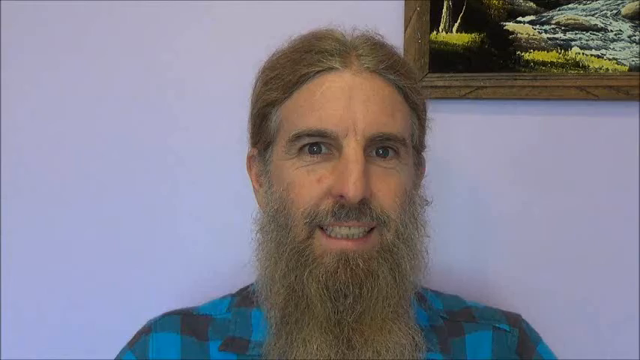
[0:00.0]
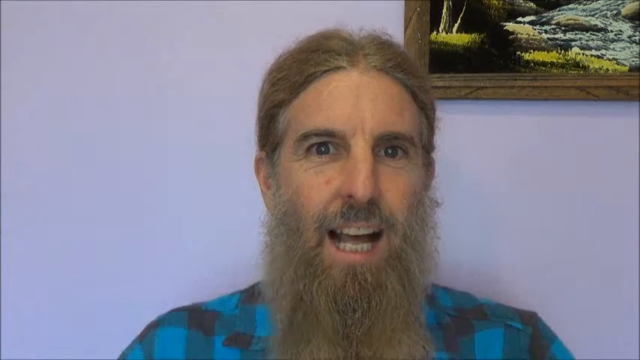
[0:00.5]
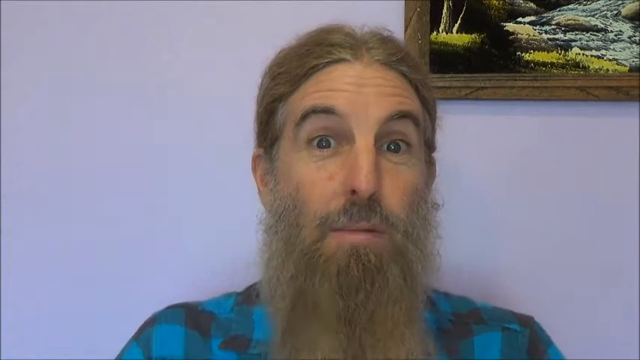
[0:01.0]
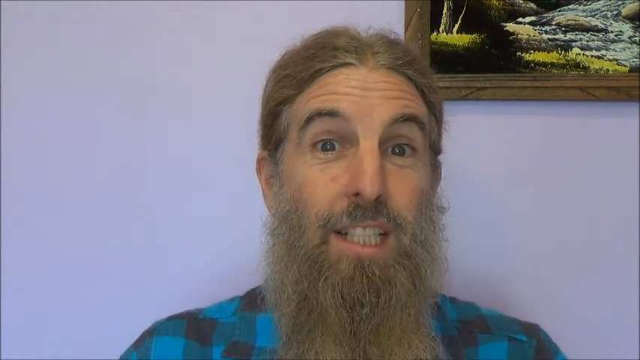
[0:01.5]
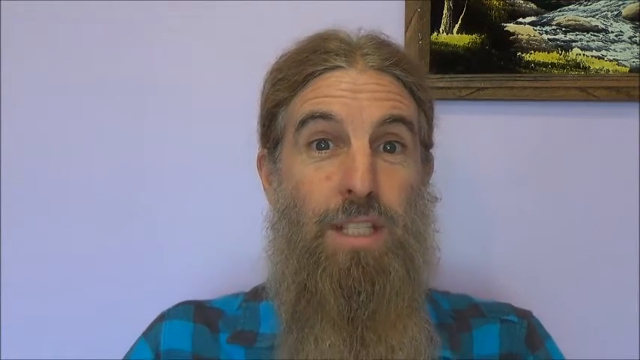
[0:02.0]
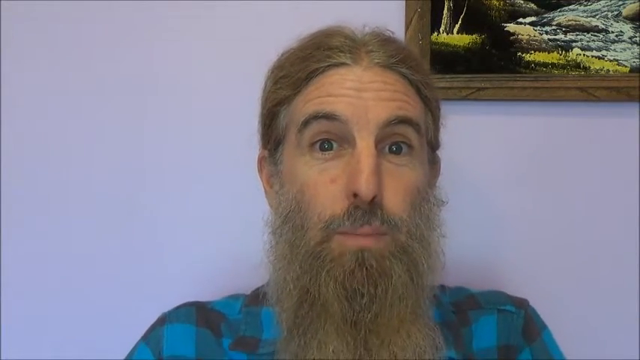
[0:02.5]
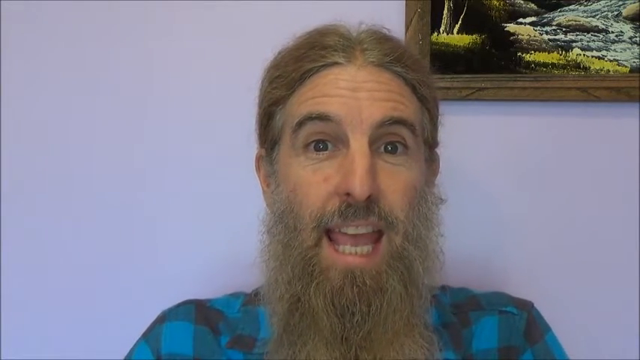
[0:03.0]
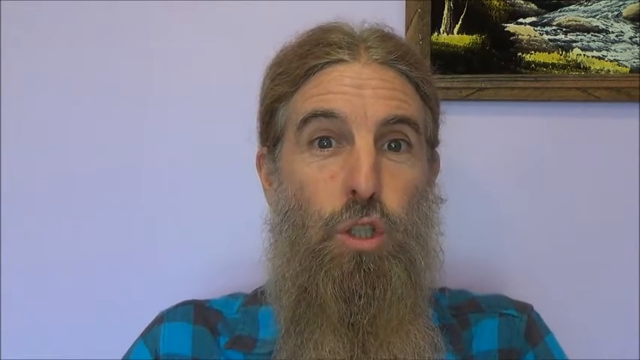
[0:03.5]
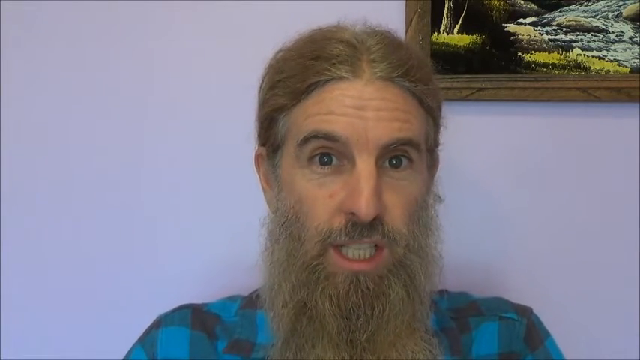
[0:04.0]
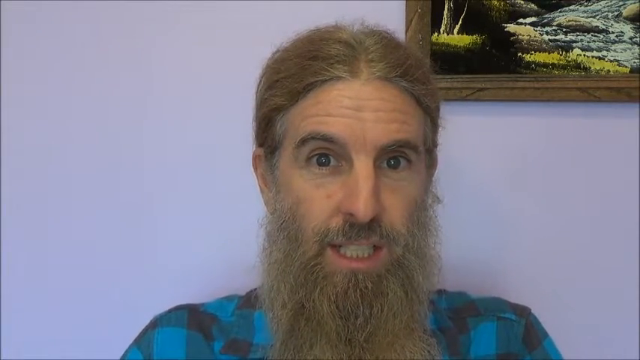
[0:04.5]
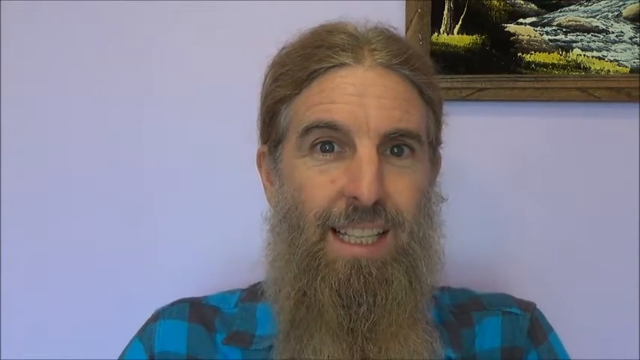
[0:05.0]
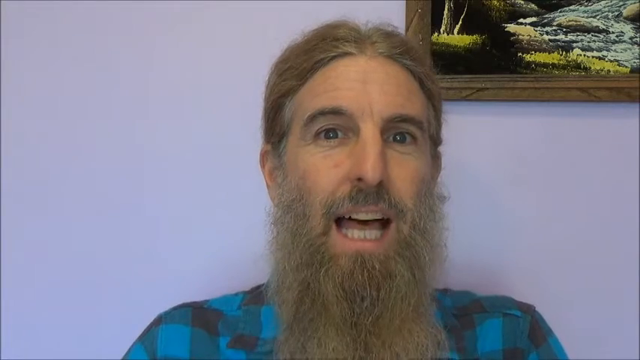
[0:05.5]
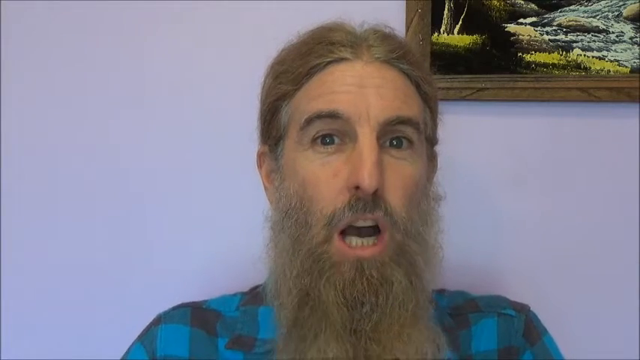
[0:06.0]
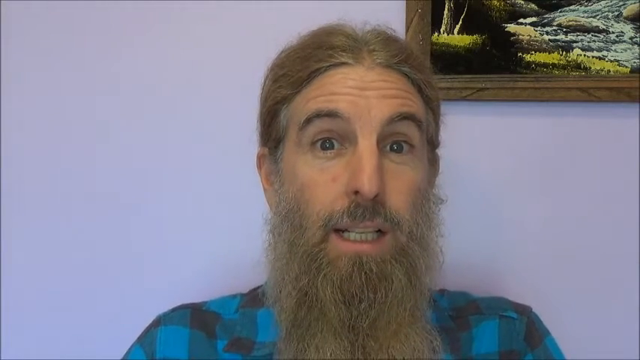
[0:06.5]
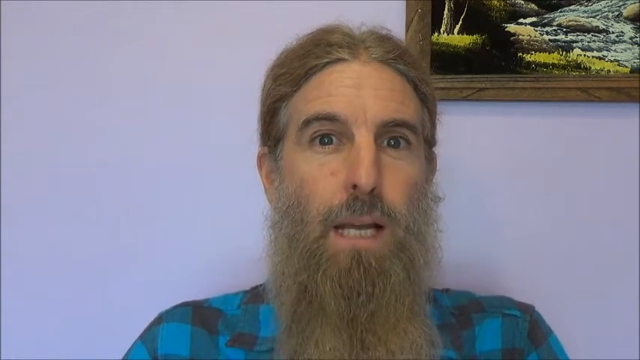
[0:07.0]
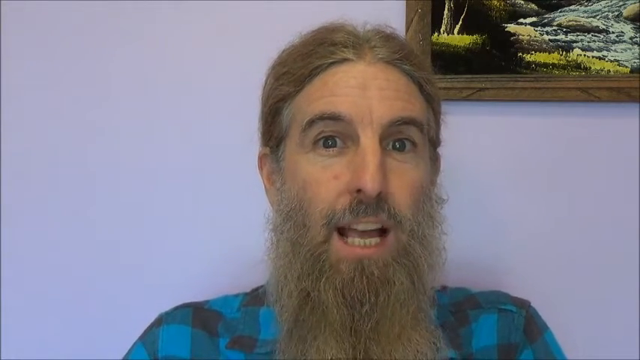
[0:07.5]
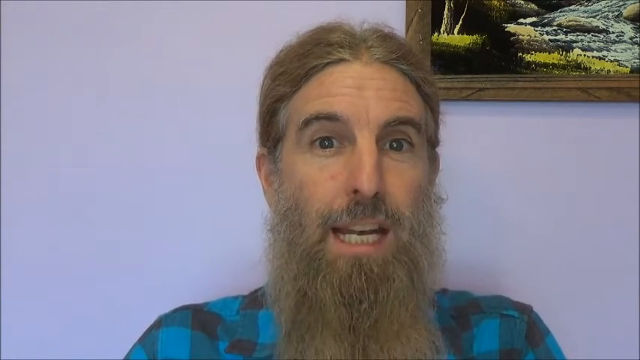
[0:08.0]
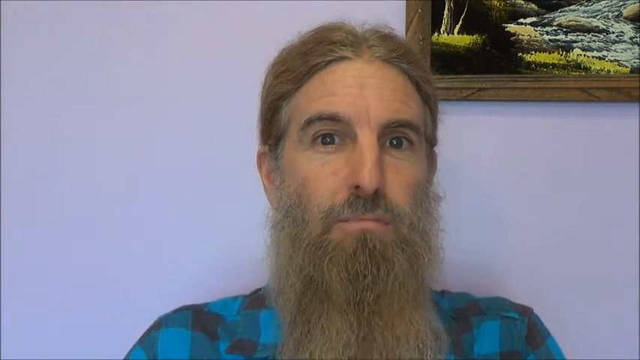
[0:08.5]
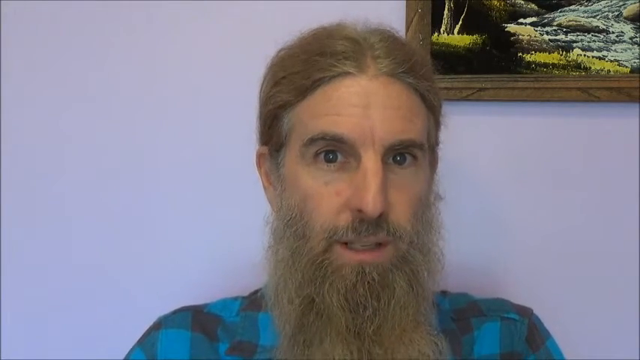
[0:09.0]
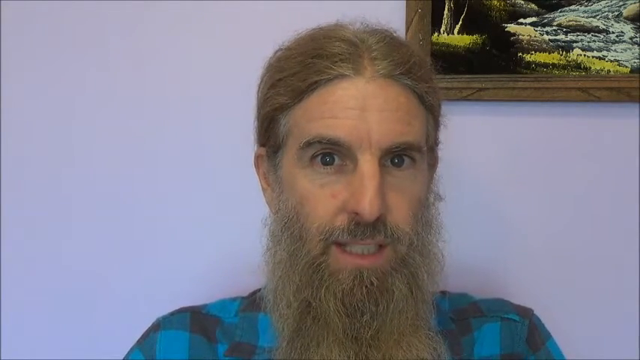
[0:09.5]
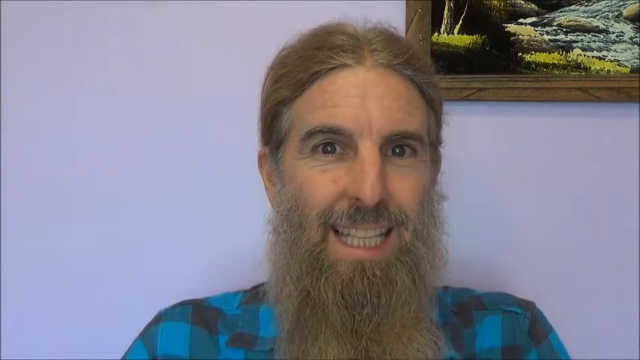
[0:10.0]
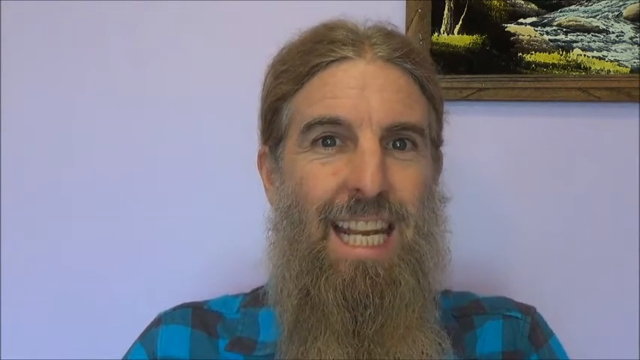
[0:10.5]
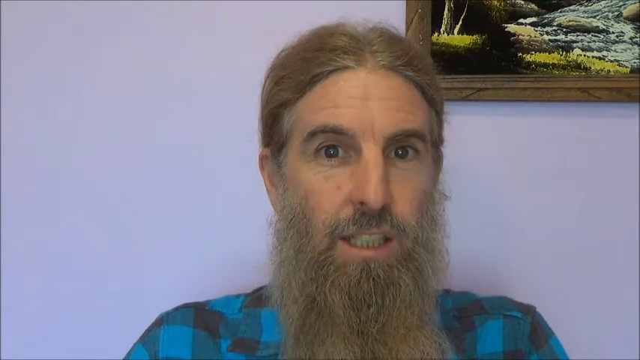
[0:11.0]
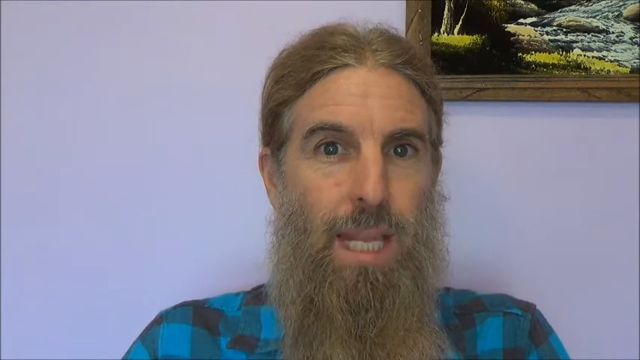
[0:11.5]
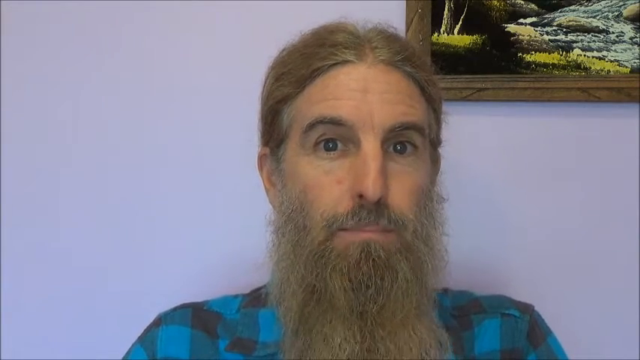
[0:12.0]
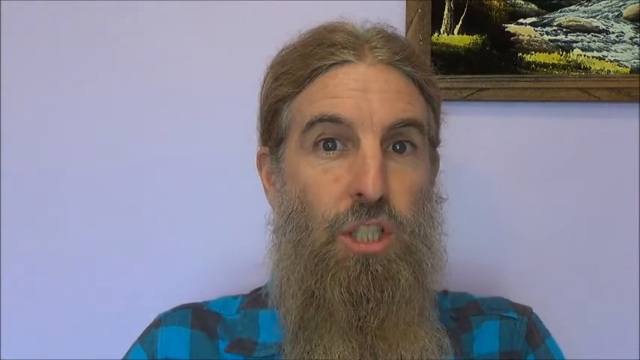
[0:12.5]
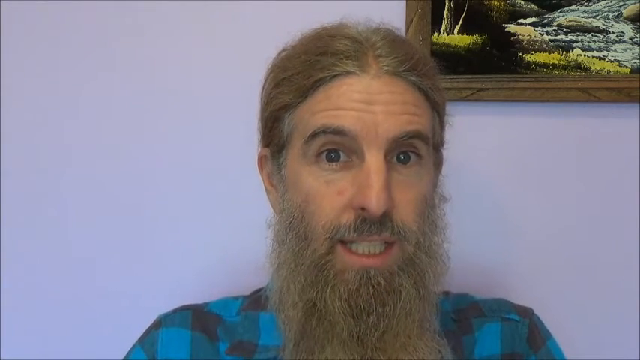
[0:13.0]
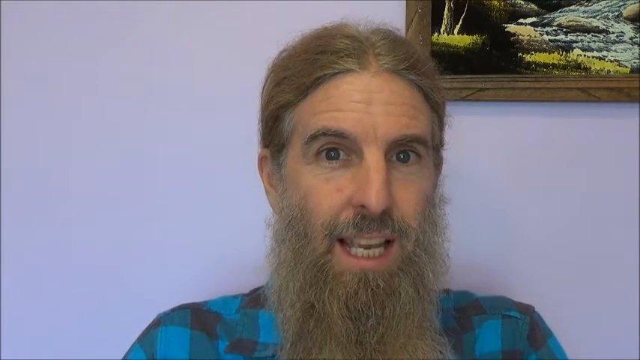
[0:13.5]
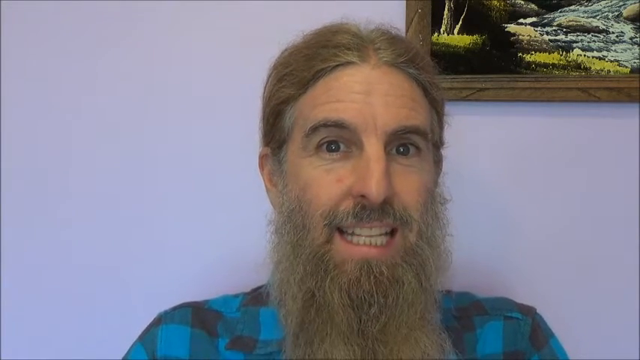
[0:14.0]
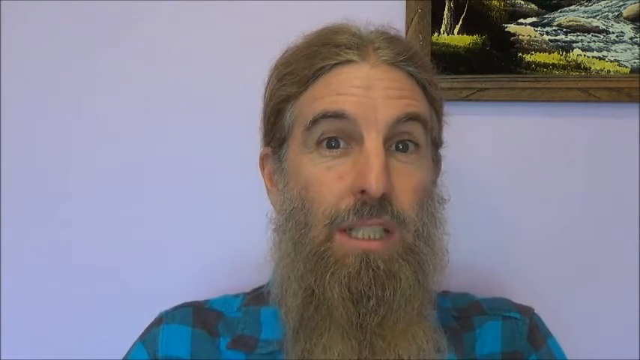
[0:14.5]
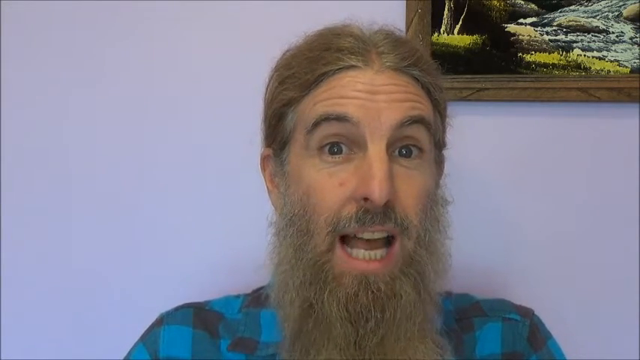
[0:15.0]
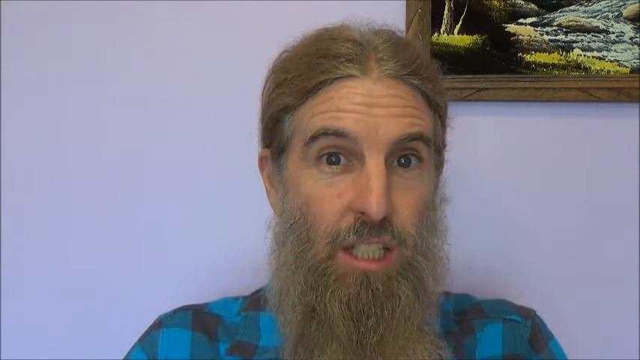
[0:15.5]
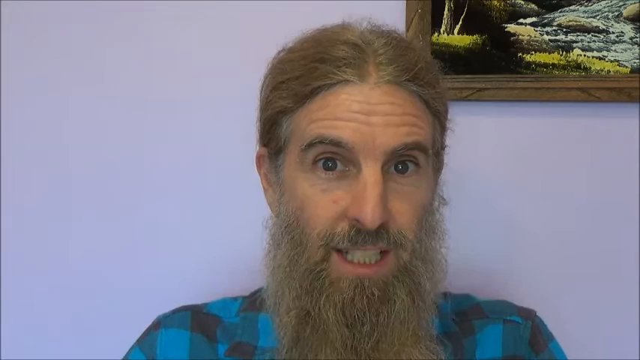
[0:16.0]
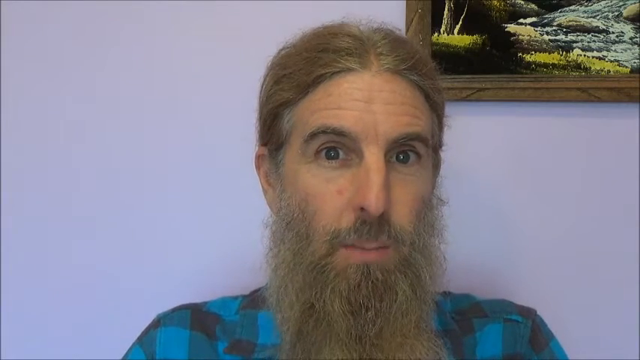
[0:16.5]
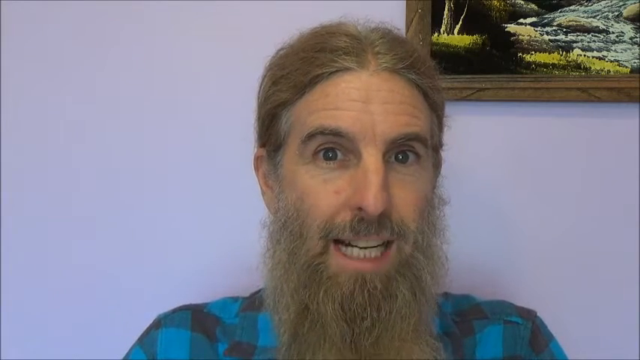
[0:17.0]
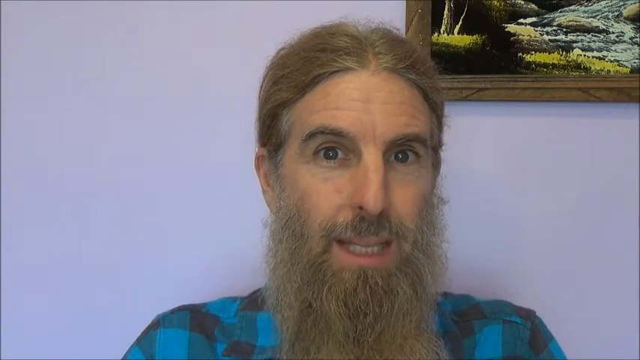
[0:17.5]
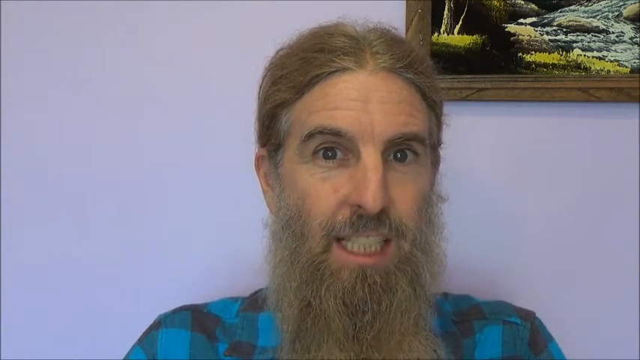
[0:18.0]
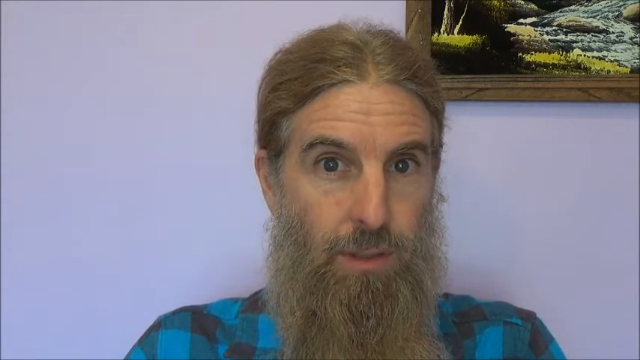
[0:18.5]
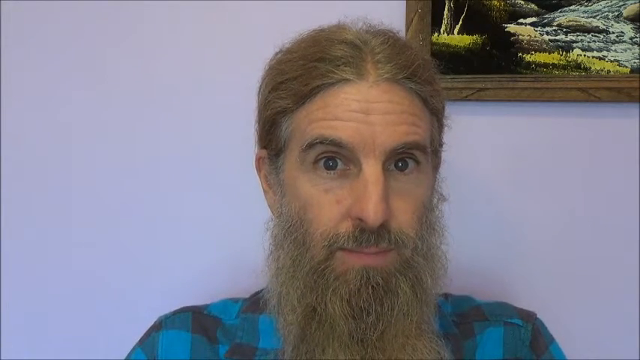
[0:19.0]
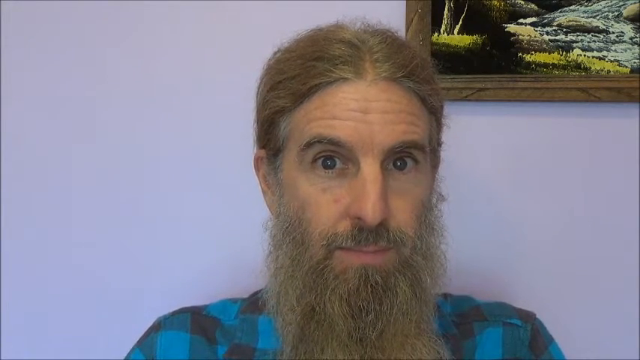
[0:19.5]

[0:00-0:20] A man is in the center of the frame in front of what appears to be a light lavender wall, though it could just be the lighting. Behind him is a photo in a wooden frame that looks to be a river scene, almost looking like one from the 60s or 70s. He has long, parted hair that appears to have a curly texture because it is a little frizzy, pulled back into something like a ponytail, and a very long, full beard and mustache. He is a white man who appears to have dark blue eyes. He is talking, smiling at first and then looking very serious. He wears a teal and black buffalo-check shirt and has what looks to be a small mole on his face under his right eye.